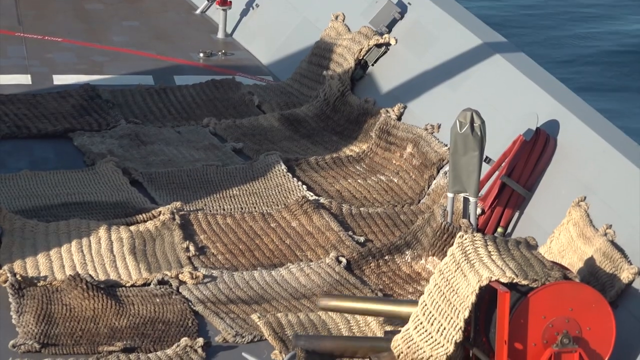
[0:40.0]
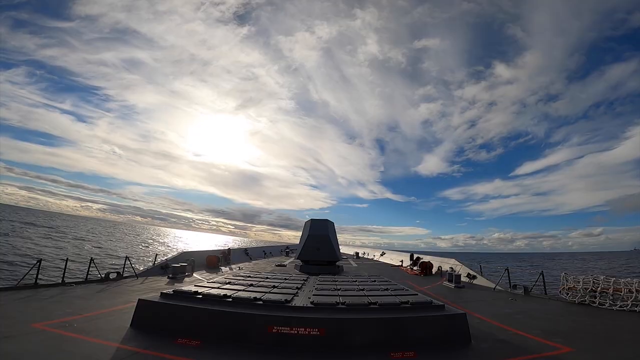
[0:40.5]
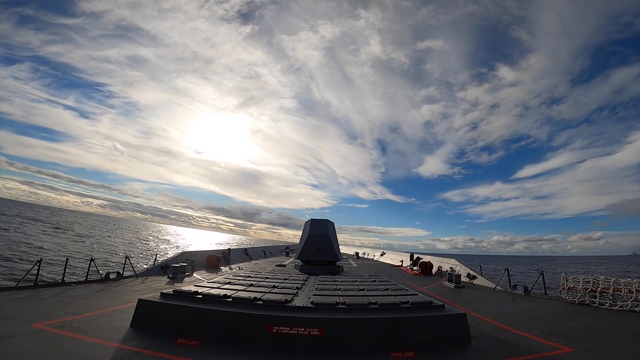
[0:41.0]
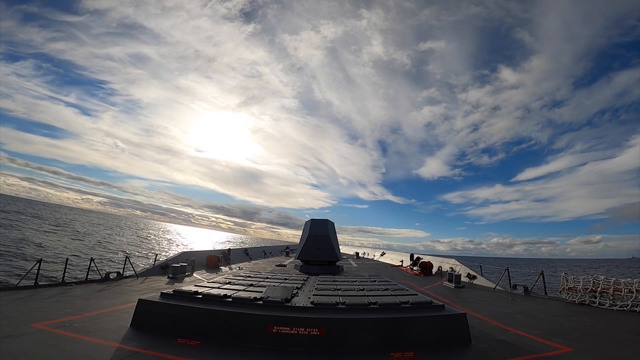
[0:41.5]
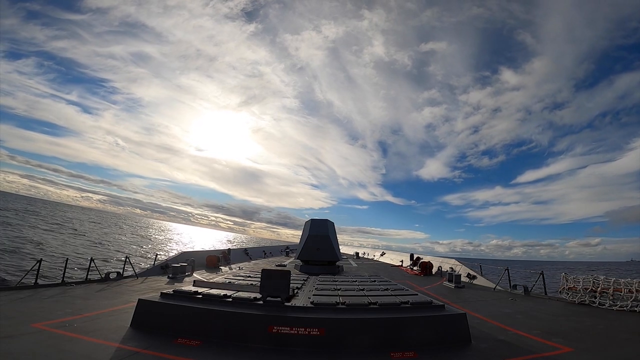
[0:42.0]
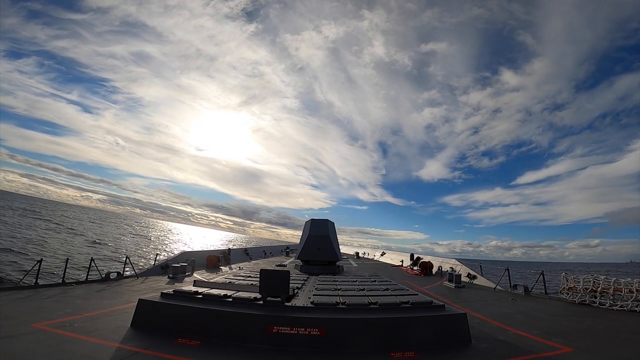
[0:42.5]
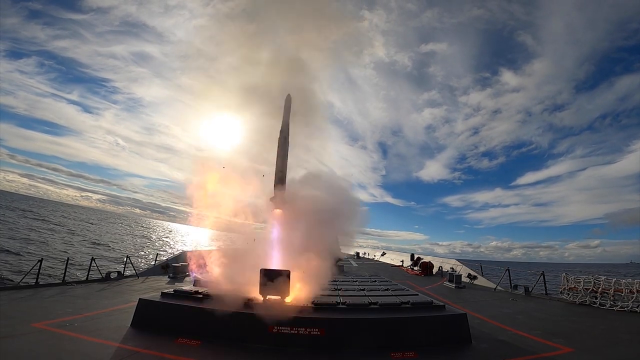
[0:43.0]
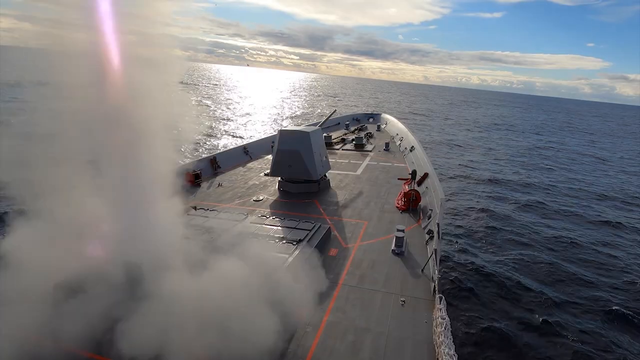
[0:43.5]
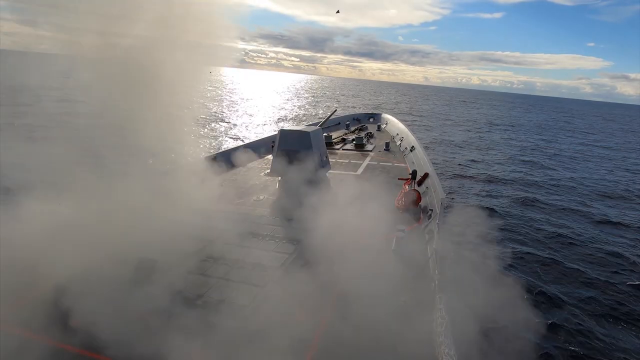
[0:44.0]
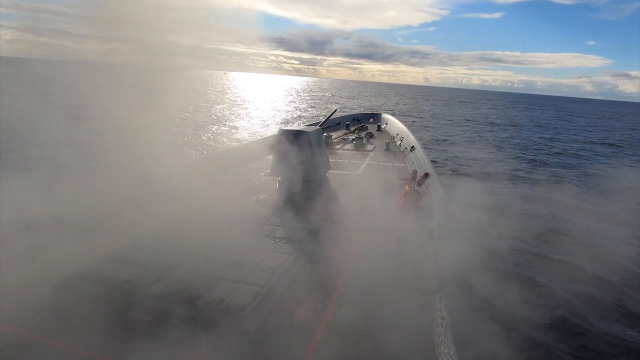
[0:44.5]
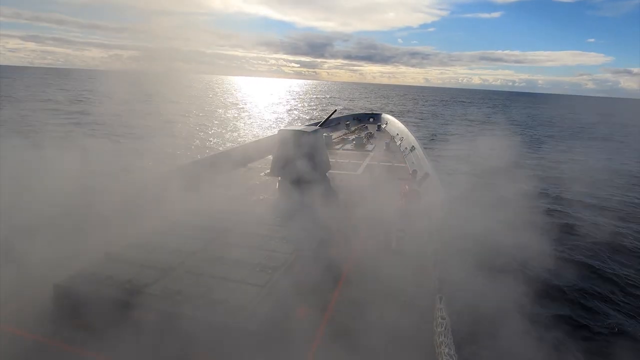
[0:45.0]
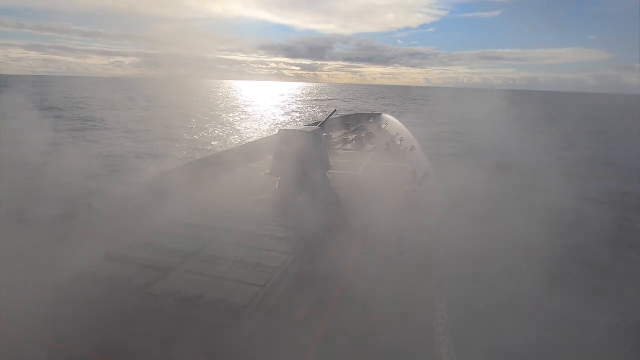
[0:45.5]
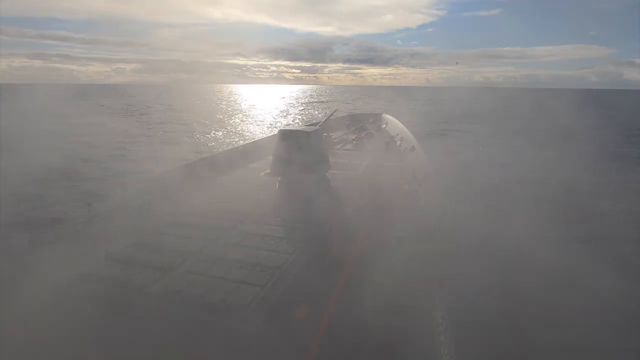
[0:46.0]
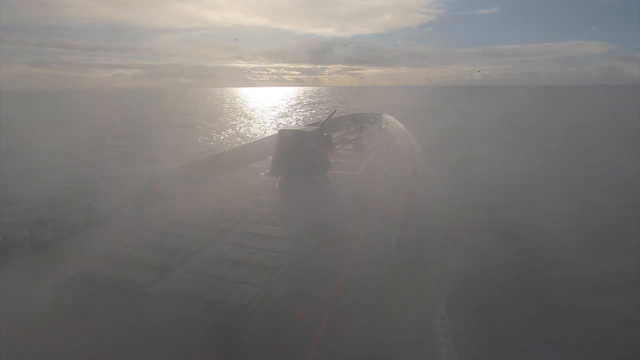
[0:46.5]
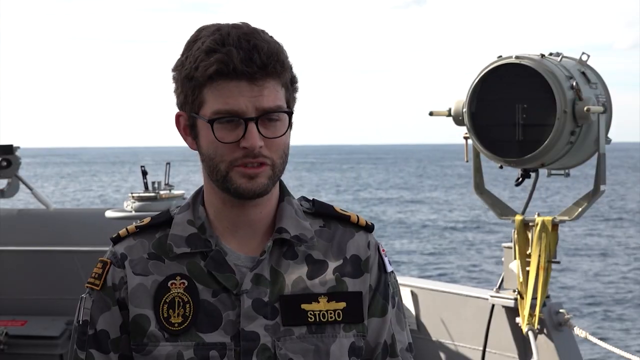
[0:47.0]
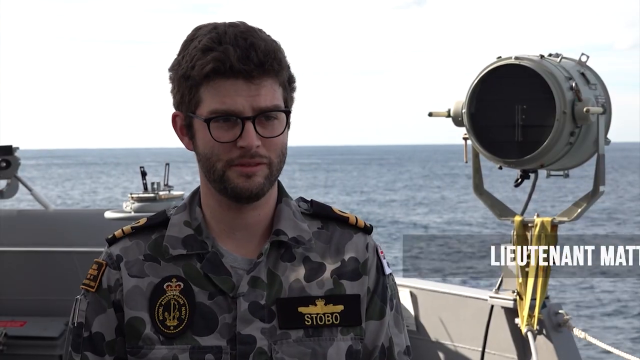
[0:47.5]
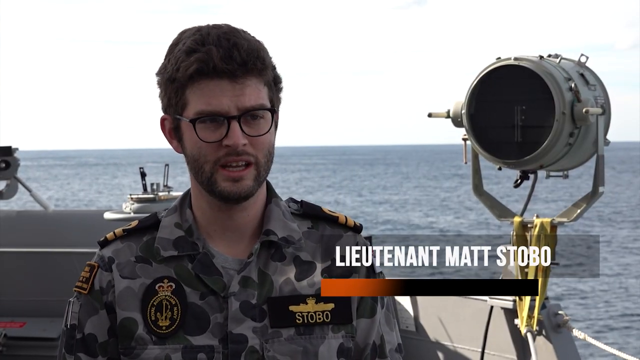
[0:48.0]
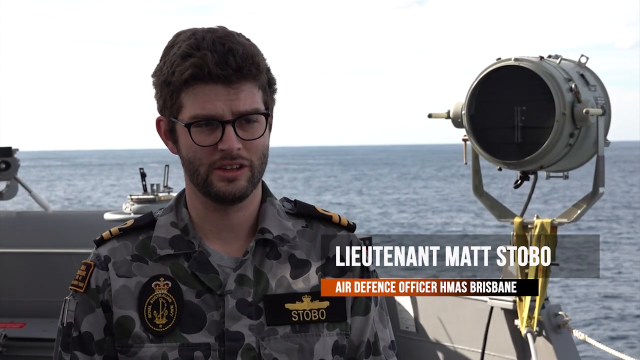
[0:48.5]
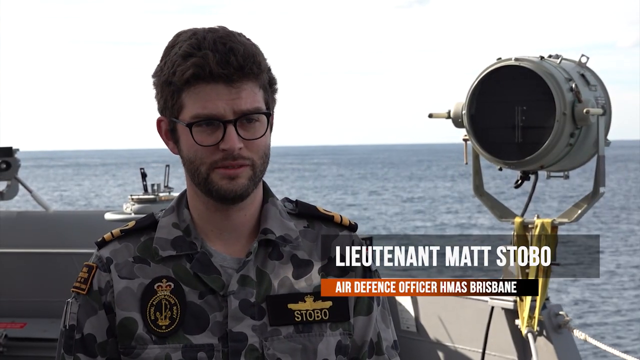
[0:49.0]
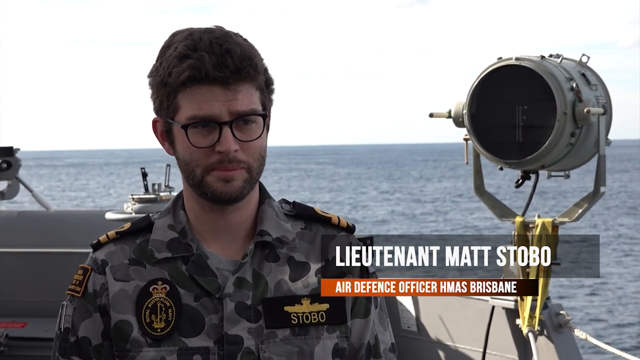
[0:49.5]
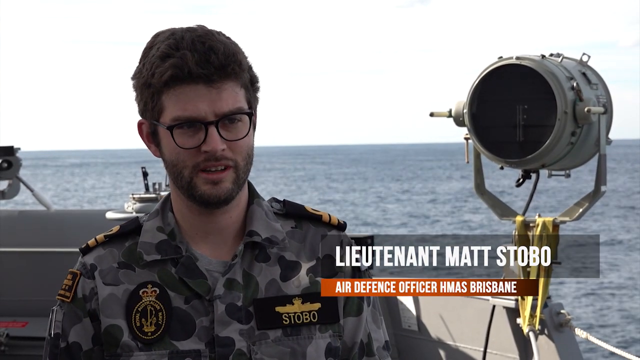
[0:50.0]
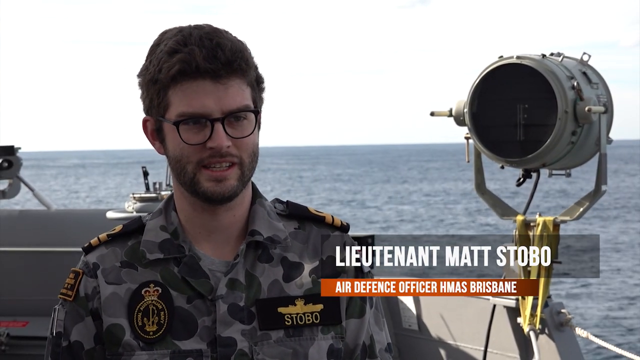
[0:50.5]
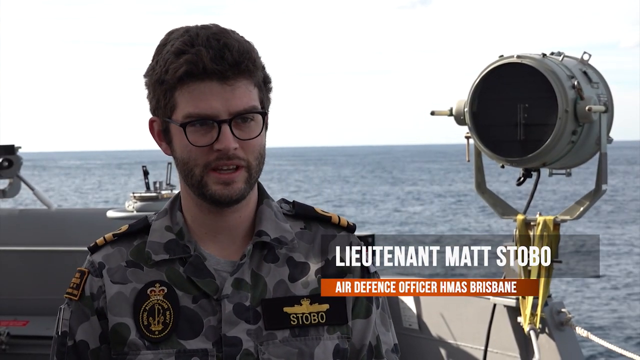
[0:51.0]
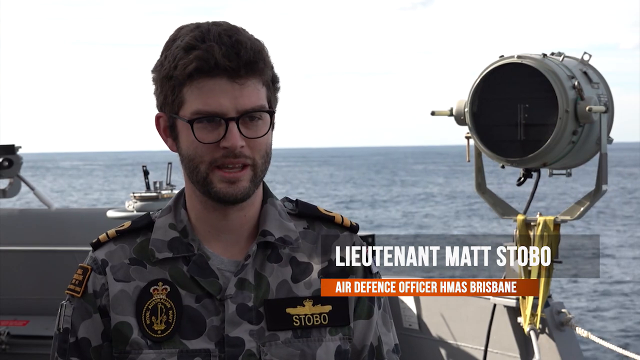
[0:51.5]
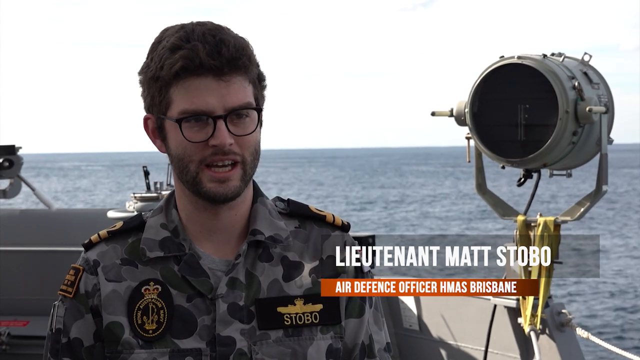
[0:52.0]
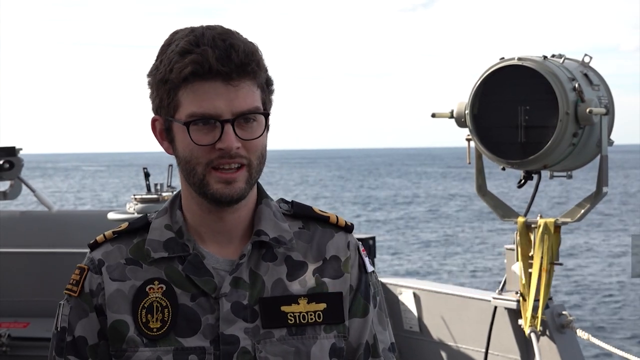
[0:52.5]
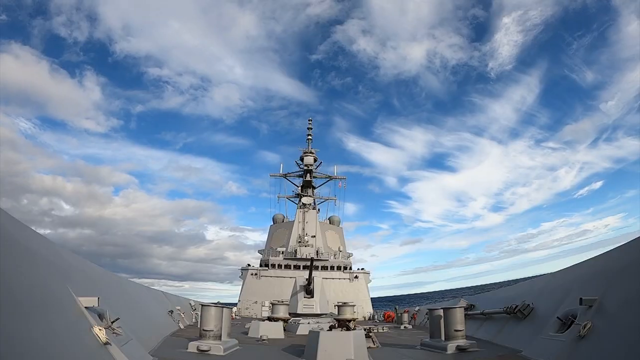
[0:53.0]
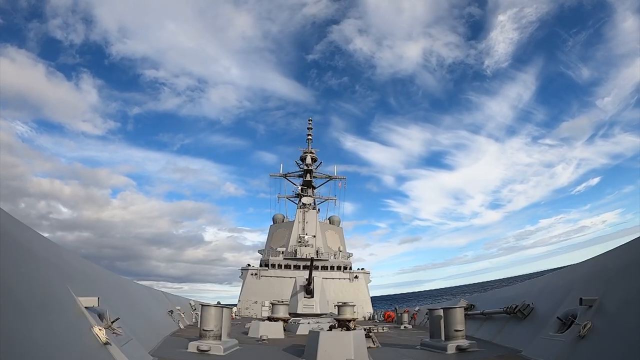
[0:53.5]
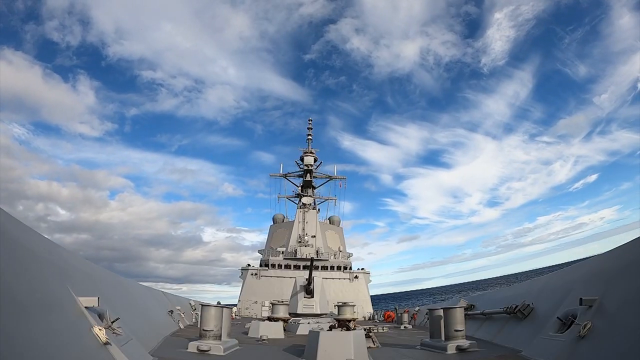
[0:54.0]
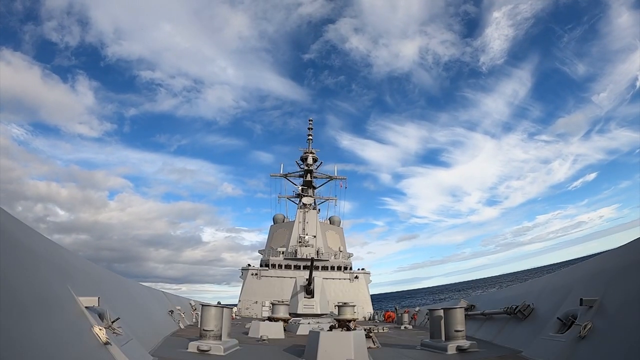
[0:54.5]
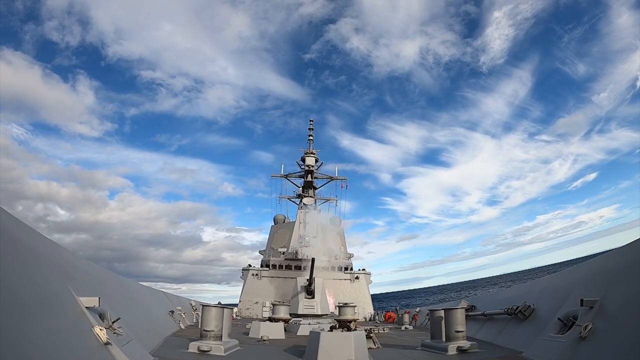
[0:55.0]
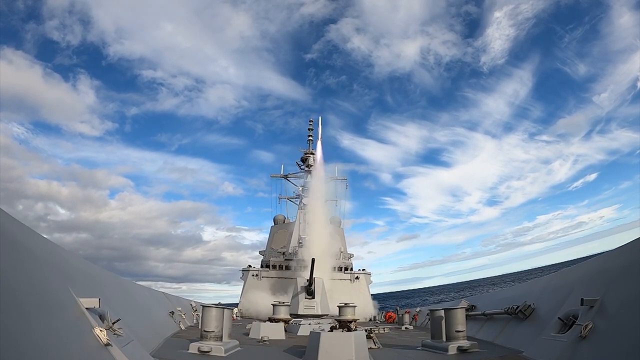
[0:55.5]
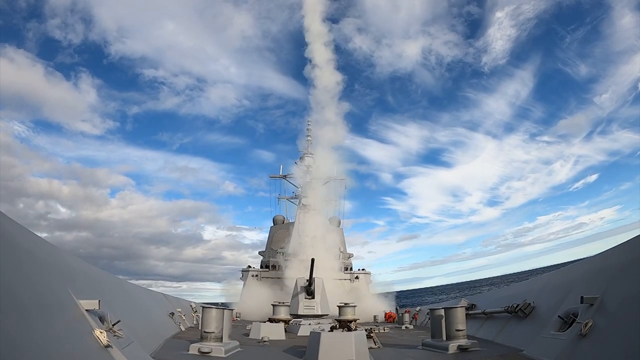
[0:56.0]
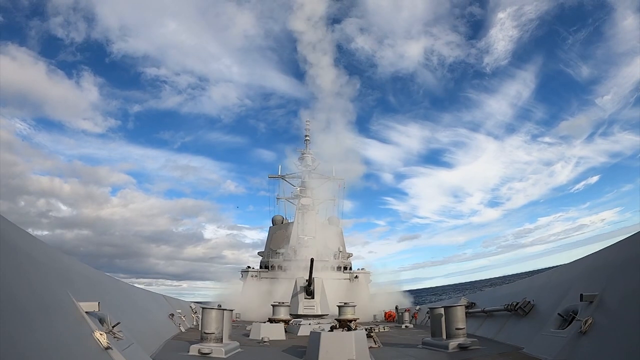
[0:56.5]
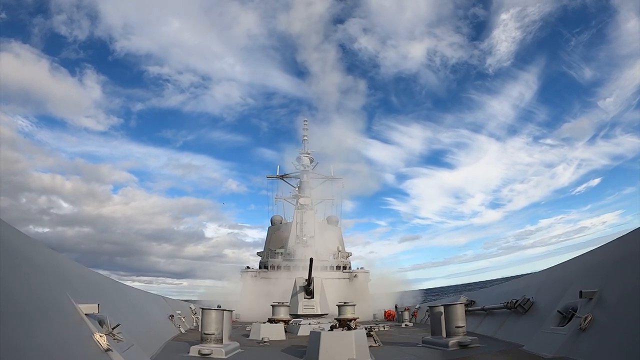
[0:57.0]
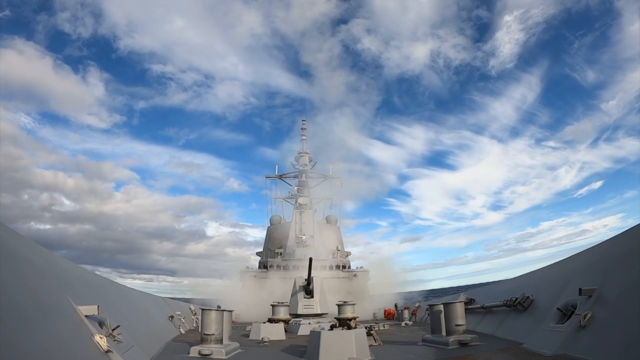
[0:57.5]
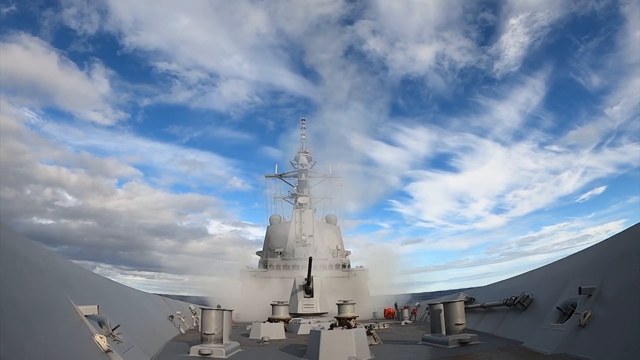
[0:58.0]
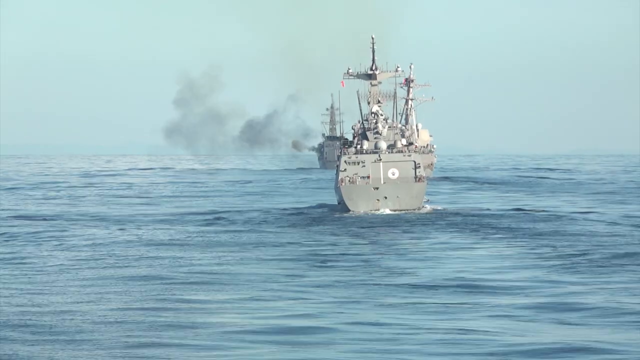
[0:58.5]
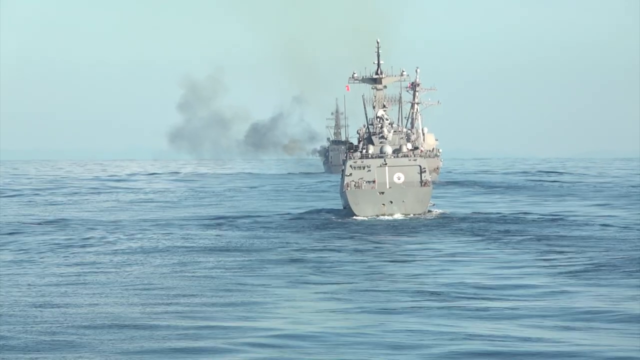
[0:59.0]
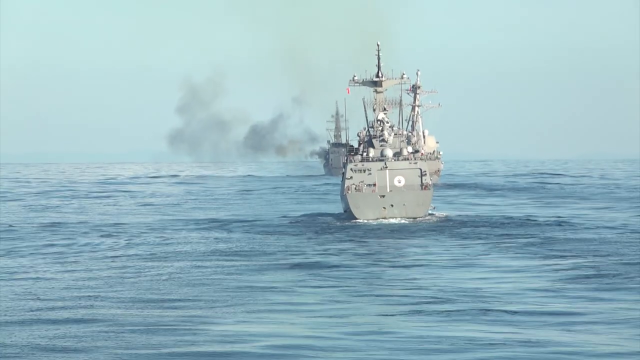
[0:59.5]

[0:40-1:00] What looks like the deck of a ship is shown, where a used shell appears to have dropped onto the deck. The view moves to the bow of a ship looking out onto the sea under a cloudy sky. From the bow, a hatch opens and a missile fires from inside the ship up into the sky, with flame coming from the bottom of the missile; seen from another angle, smoke fills the screen. In another scene, a white man in glasses and uniform appears, and his name comes up in white: "Lieutenant Matt Stobo", with the words "Air Defense Officer HMAS Brisbane" underneath. He appears to be standing on the ship next to what looks like a searchlight and talks directly to the camera. The scene changes to a view looking up into the sky, where the top of the ship goes upwards; from the ship below, a missile shoots up and white smoke goes all the way up, covering the top of the ship as it rises into the sky. Several ships are then on the ocean, and one appears to be firing, as there is smoke coming from it.